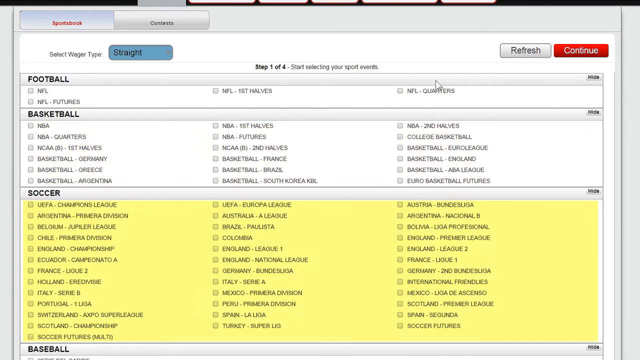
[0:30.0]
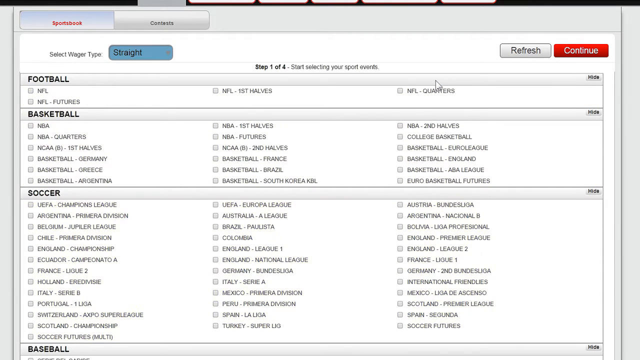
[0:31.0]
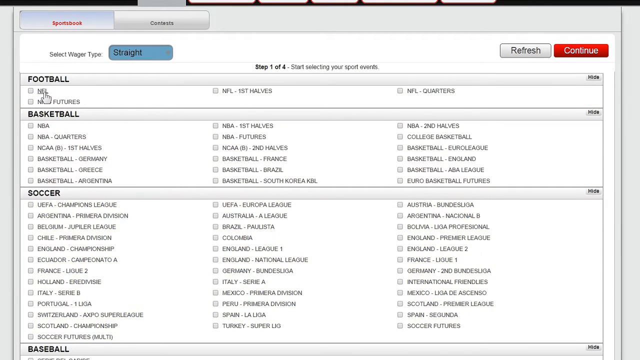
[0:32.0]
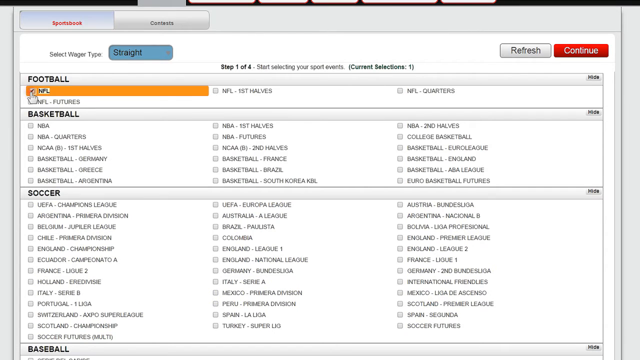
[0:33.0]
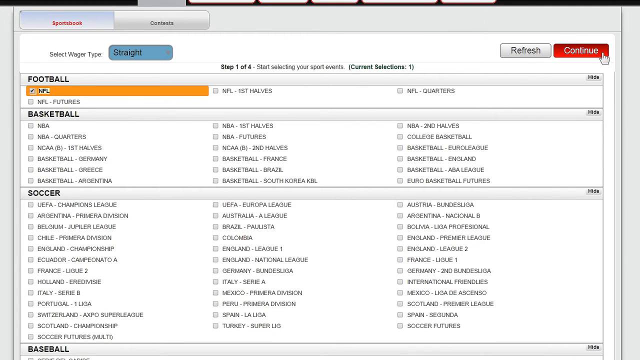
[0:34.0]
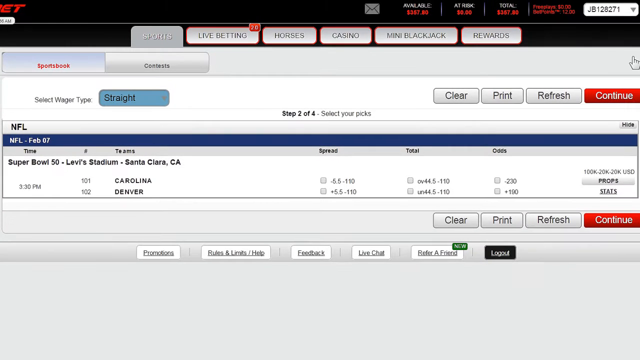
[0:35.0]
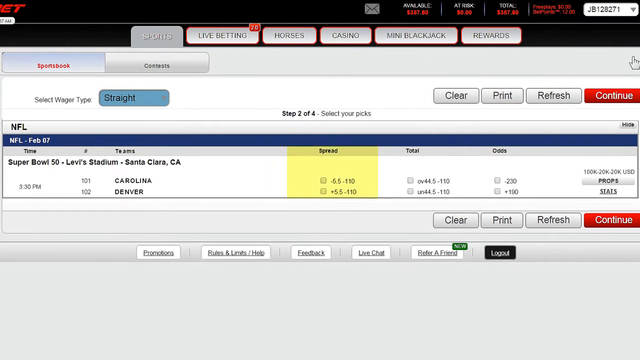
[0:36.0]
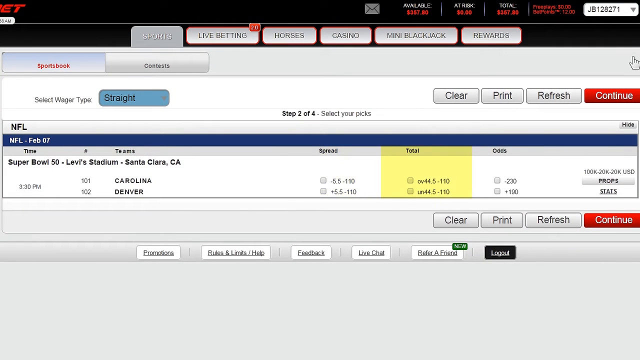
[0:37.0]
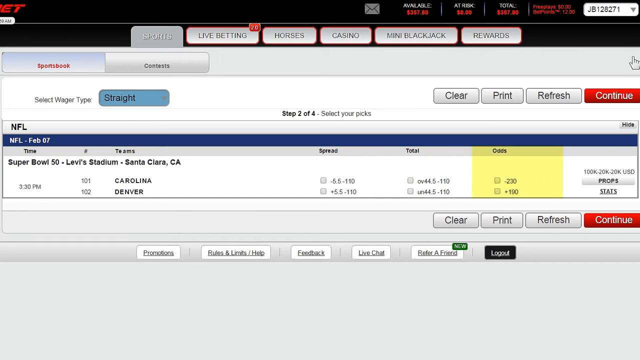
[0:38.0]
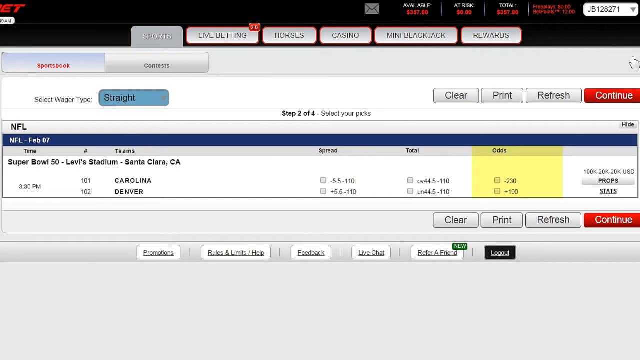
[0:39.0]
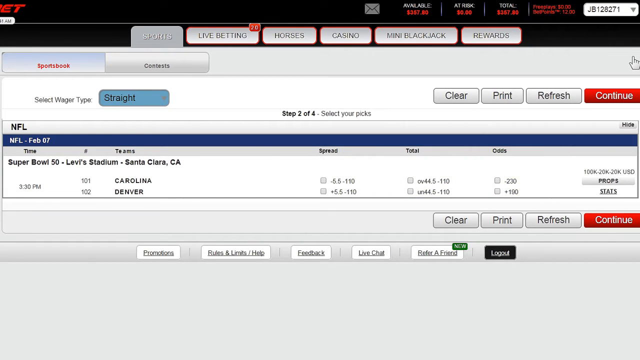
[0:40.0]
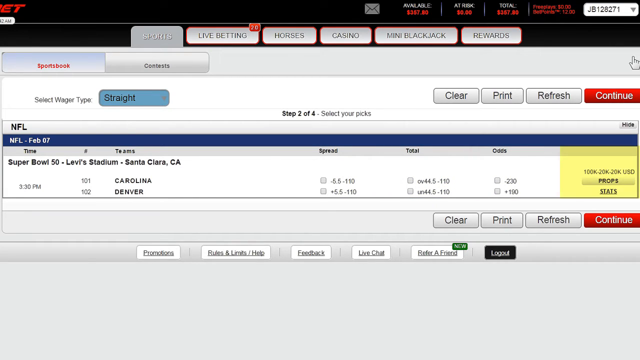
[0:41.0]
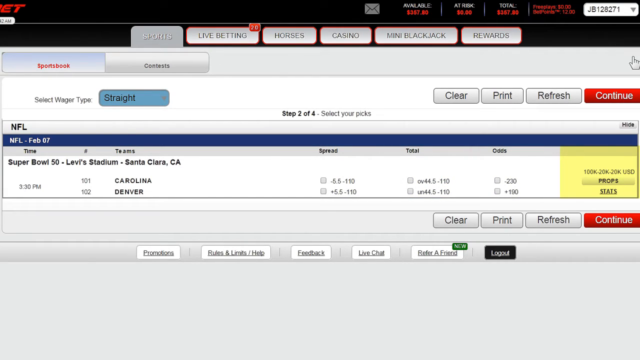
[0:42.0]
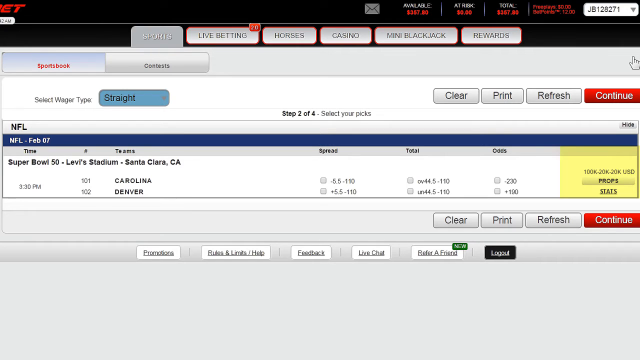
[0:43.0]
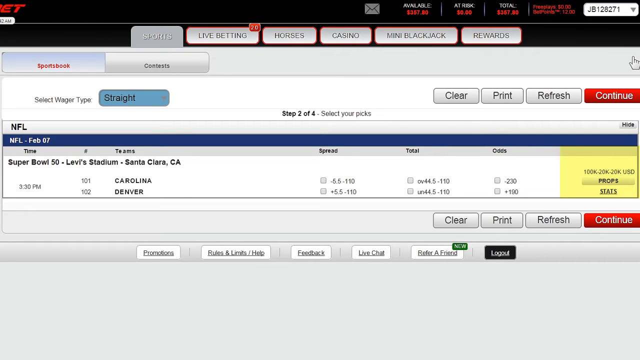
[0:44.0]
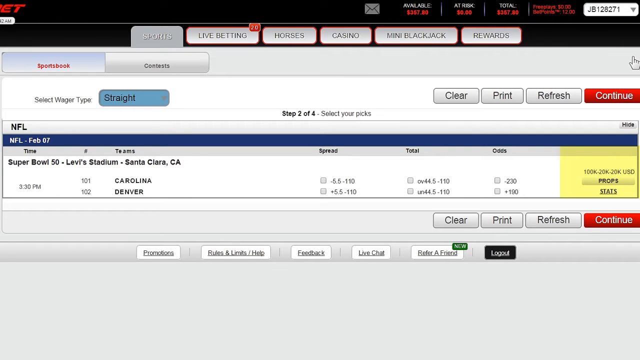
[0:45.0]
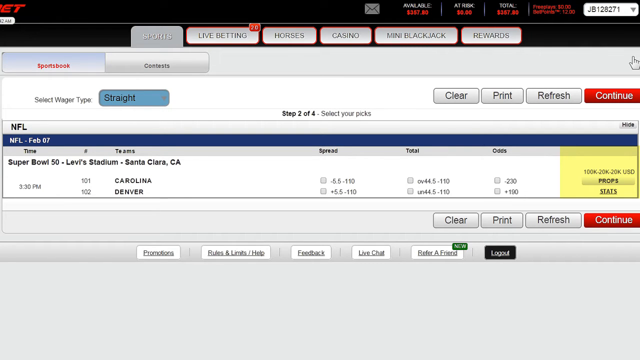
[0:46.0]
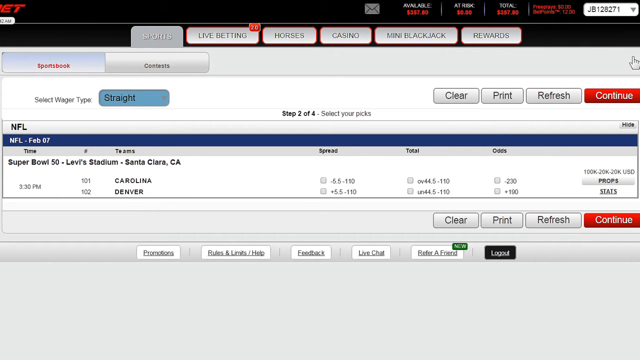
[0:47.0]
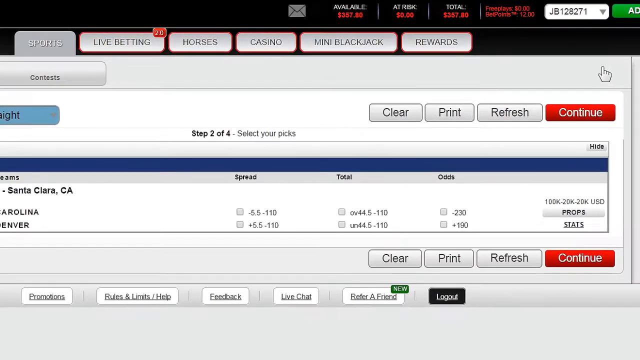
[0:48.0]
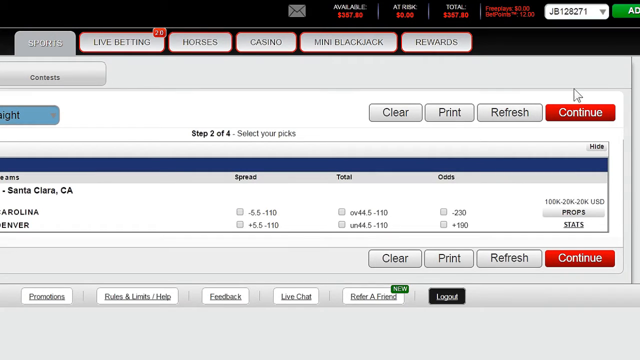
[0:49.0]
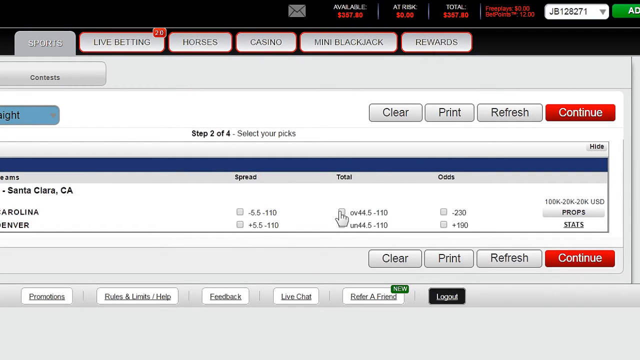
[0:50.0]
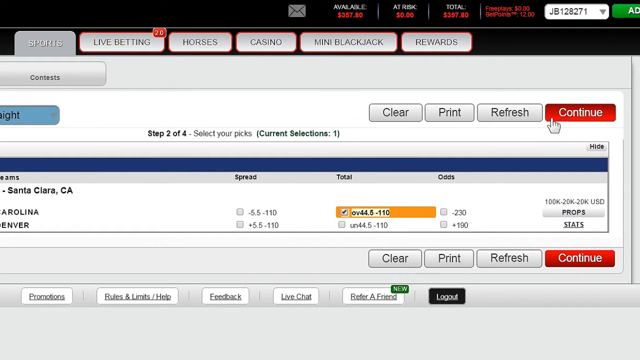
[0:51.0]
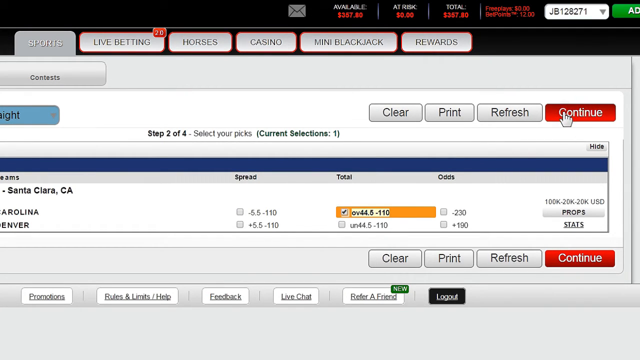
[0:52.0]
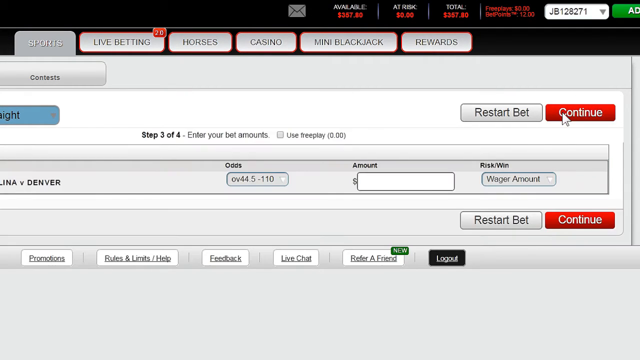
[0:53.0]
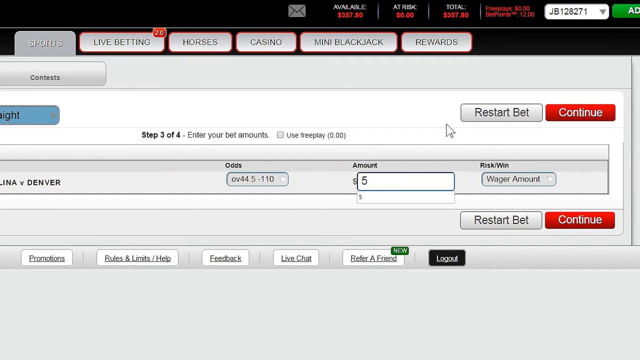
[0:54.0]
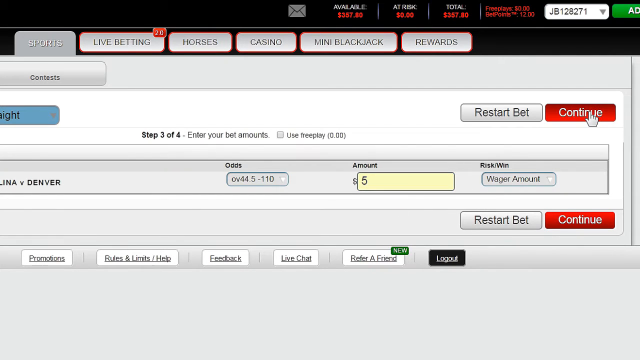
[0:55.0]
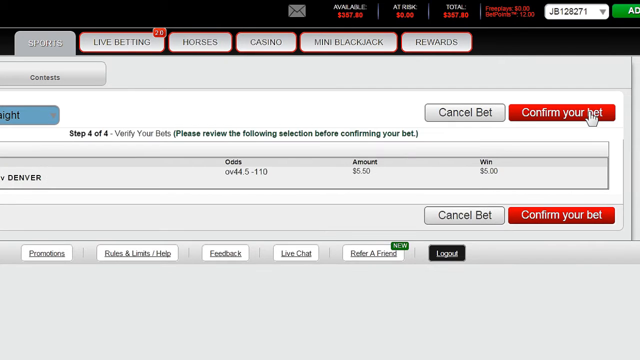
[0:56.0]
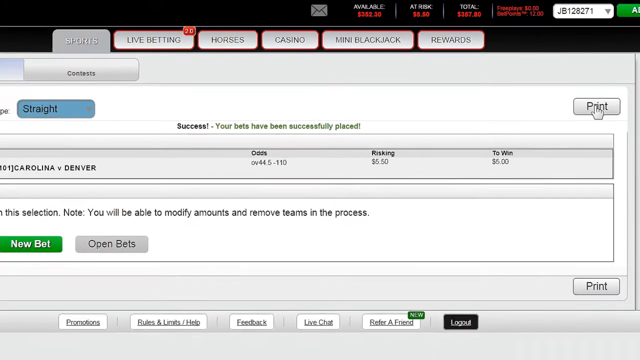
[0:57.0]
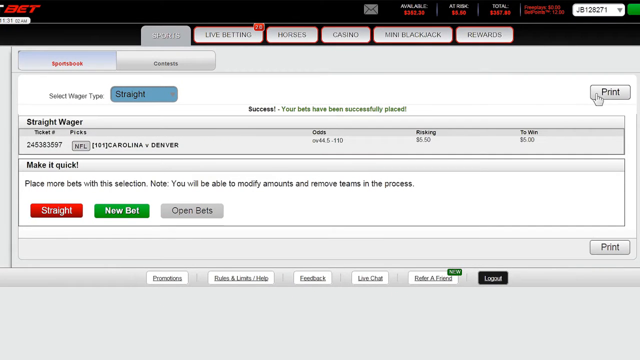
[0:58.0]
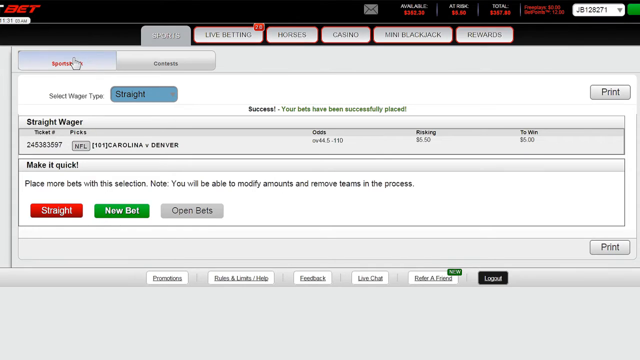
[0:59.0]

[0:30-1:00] On a live sports betting website, a cursor moves around and highlights football, then clicks continue, a red button on the right-hand side. In a close-up, the cursor clicks on total and a dollar amount and clicks continue. A dollar amount is entered and then print is selected. The cursor highlights the entire soccer section, with all of the teams listed underneath, then moves back to football and highlights it. "Live betting" is listed at the top, with a red circle near that category.